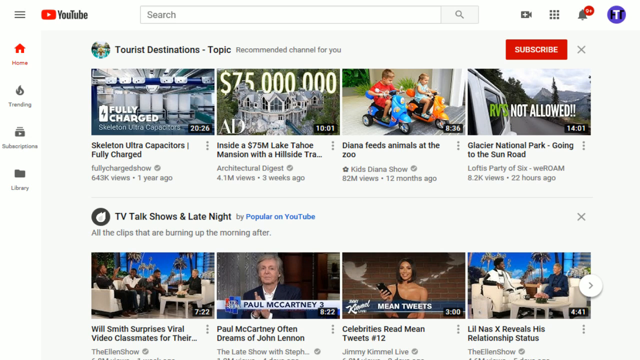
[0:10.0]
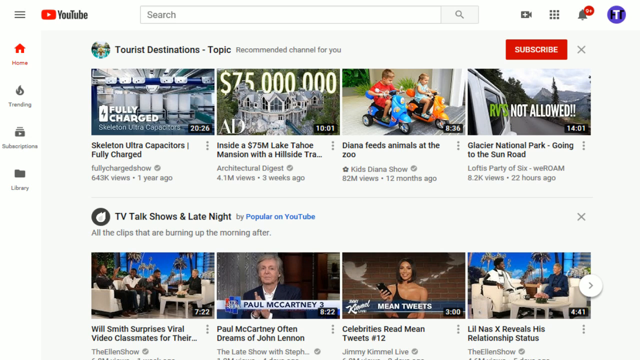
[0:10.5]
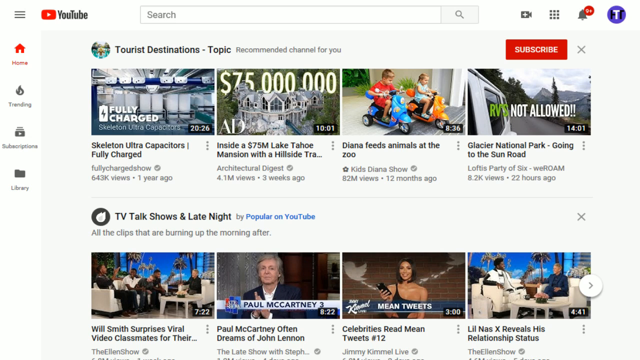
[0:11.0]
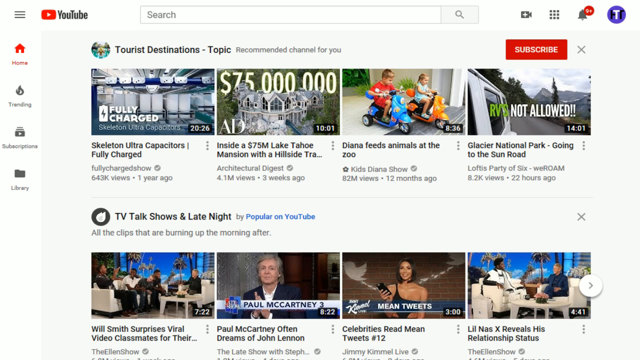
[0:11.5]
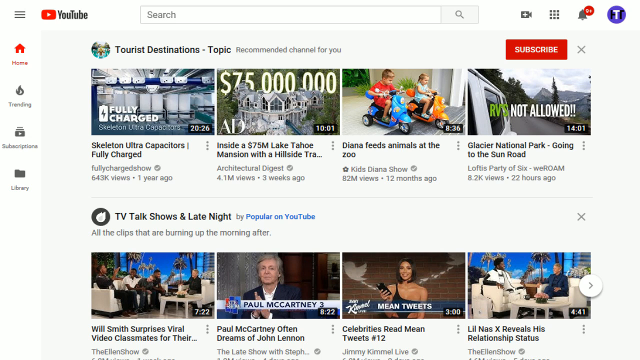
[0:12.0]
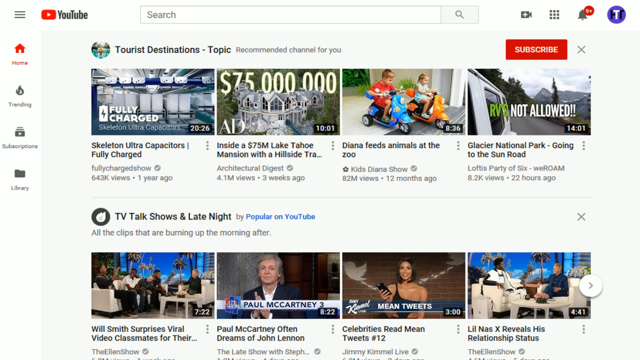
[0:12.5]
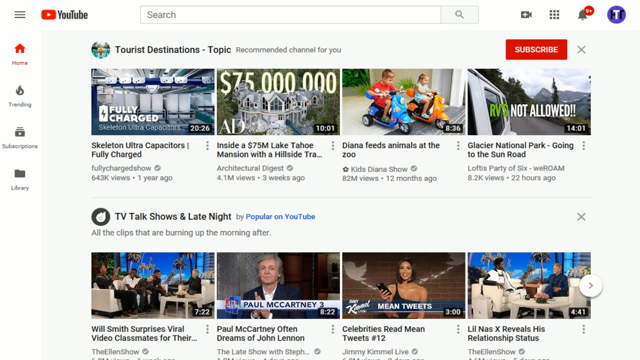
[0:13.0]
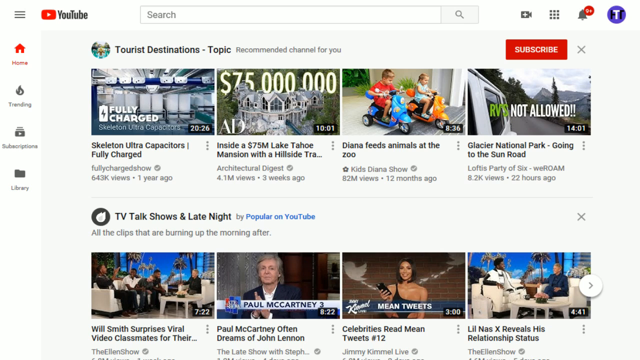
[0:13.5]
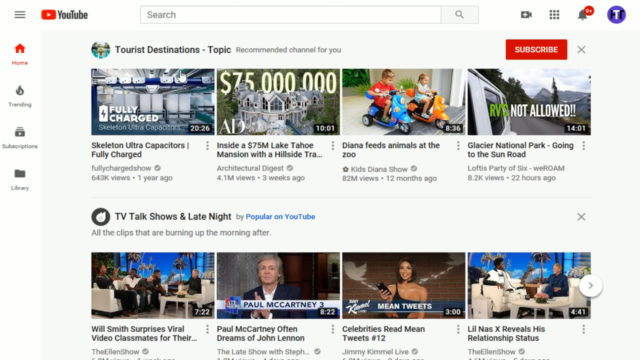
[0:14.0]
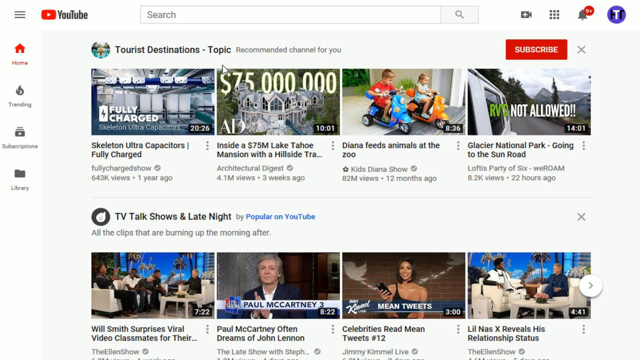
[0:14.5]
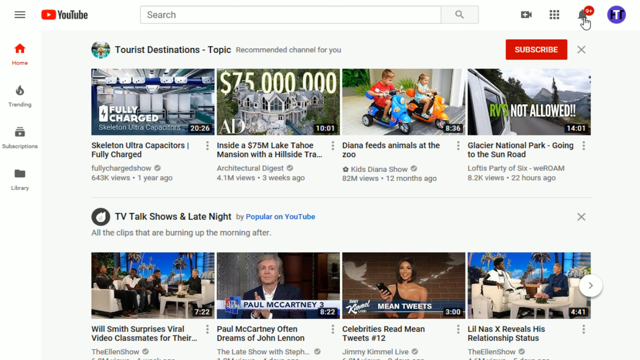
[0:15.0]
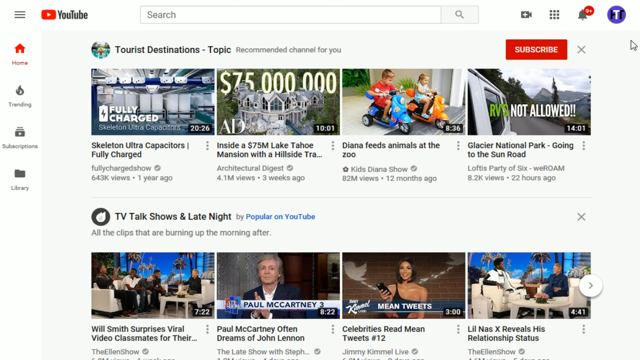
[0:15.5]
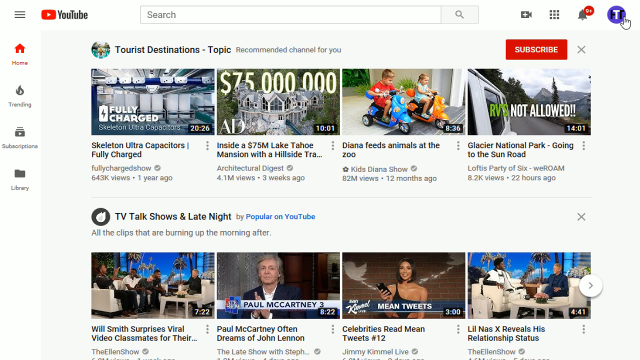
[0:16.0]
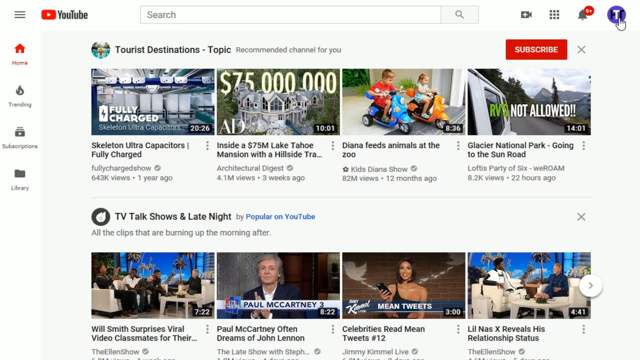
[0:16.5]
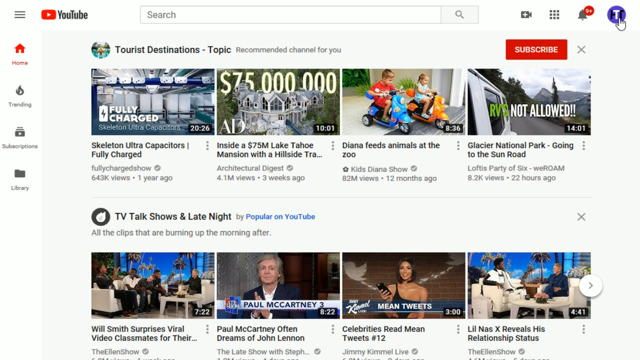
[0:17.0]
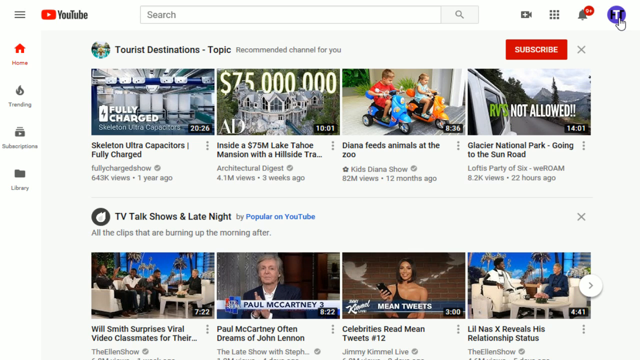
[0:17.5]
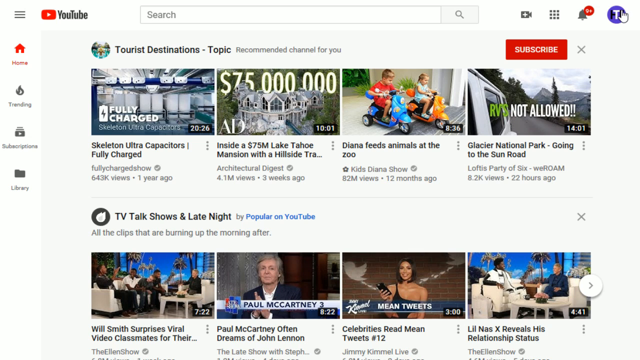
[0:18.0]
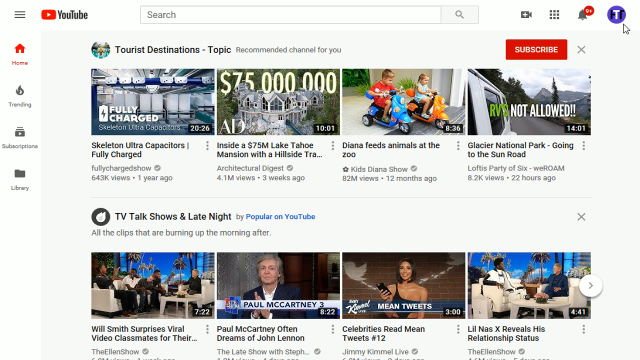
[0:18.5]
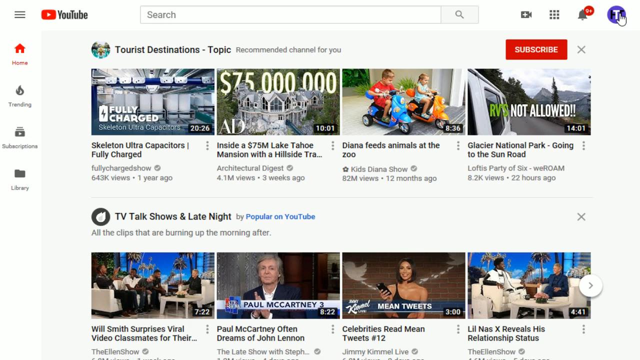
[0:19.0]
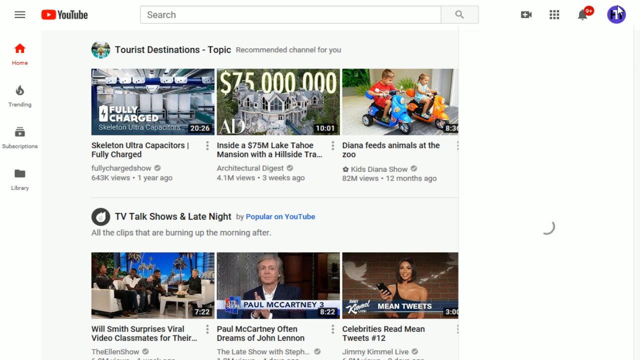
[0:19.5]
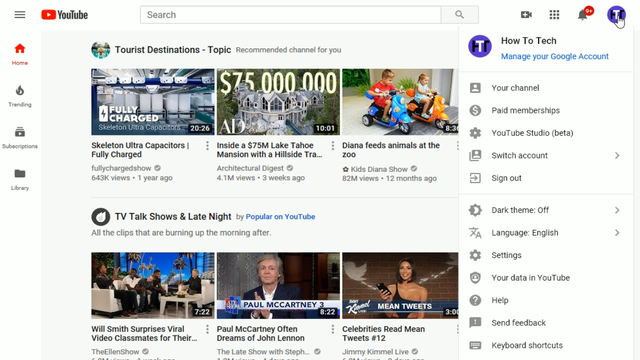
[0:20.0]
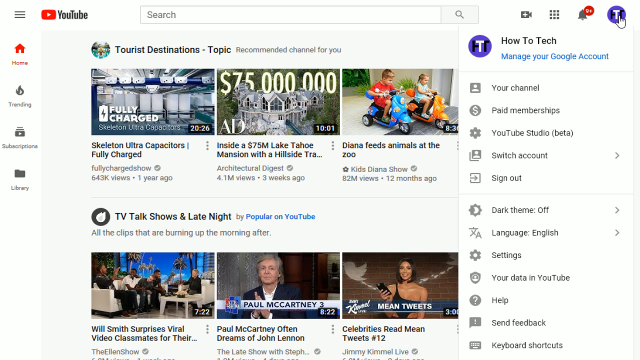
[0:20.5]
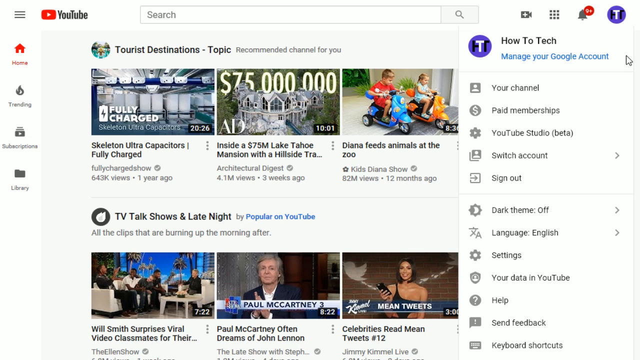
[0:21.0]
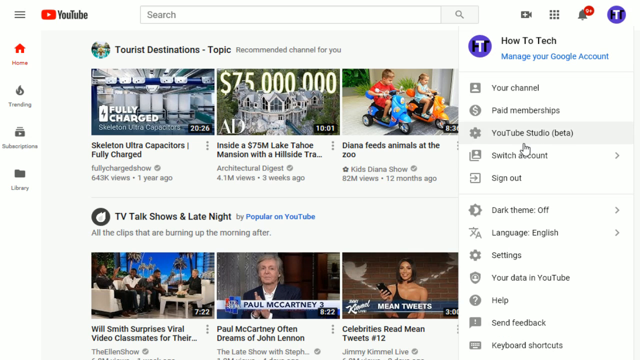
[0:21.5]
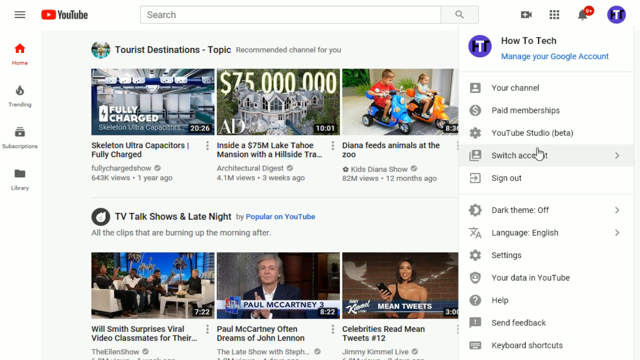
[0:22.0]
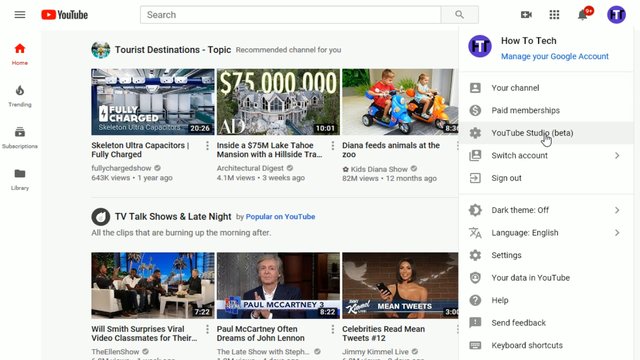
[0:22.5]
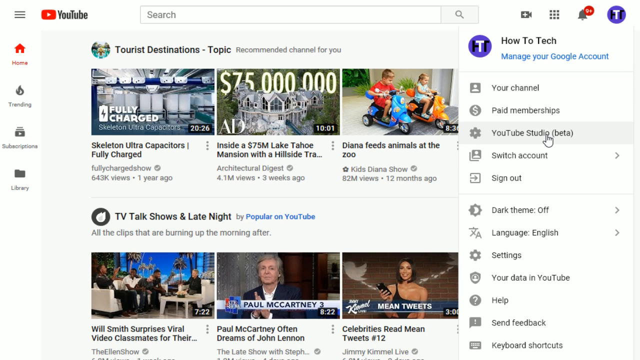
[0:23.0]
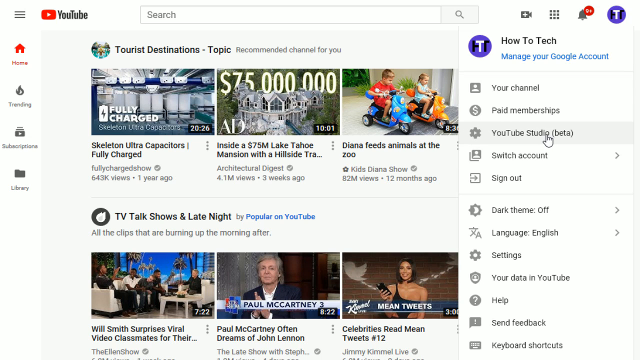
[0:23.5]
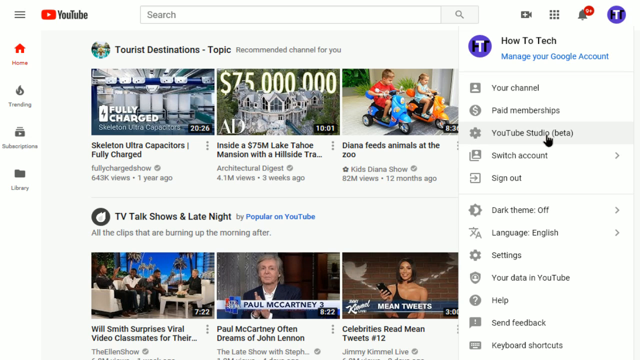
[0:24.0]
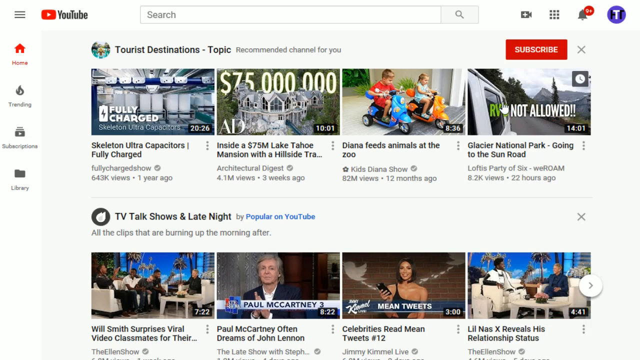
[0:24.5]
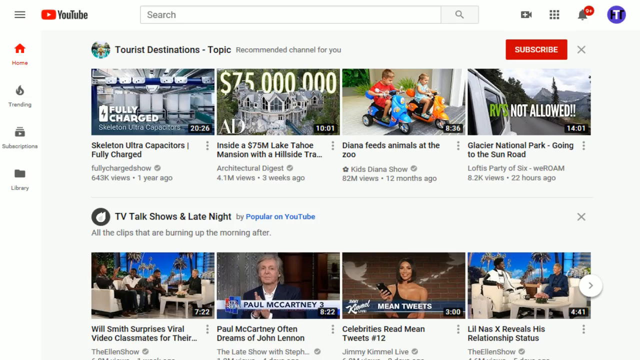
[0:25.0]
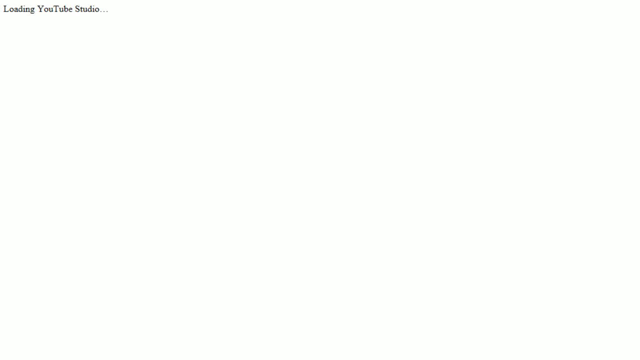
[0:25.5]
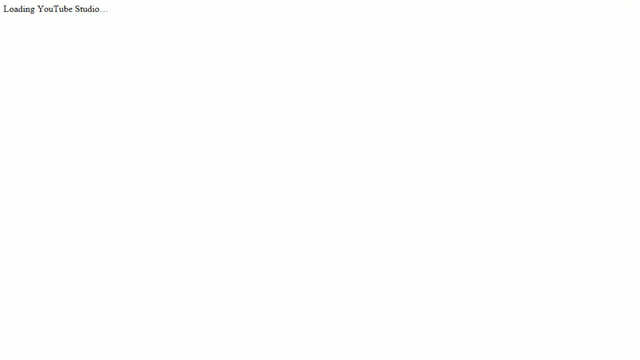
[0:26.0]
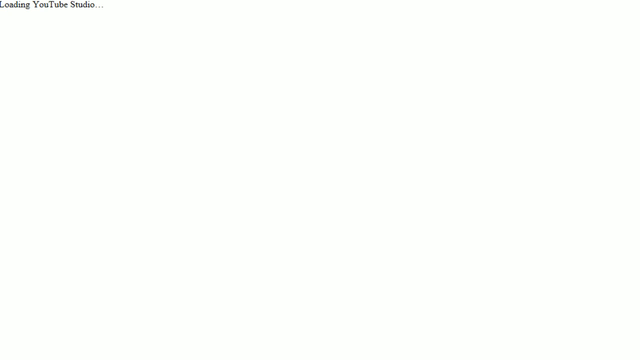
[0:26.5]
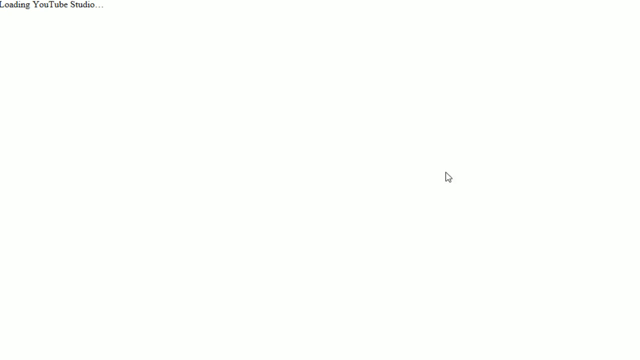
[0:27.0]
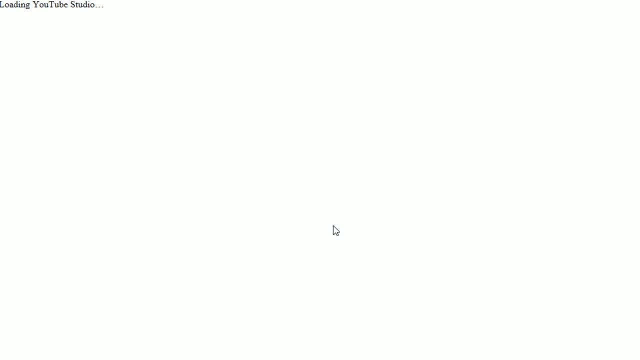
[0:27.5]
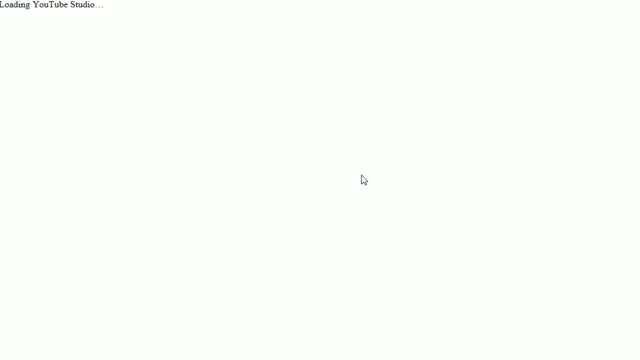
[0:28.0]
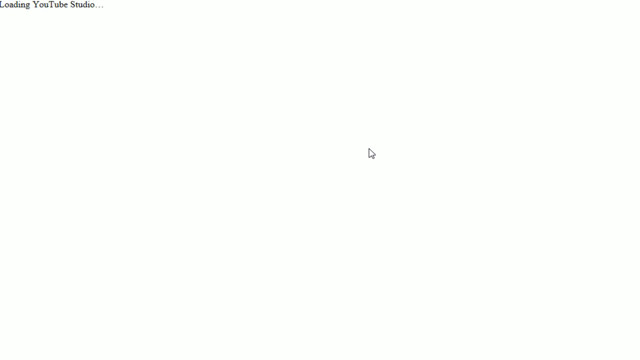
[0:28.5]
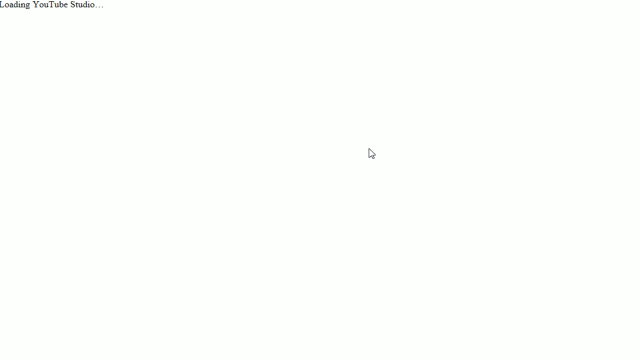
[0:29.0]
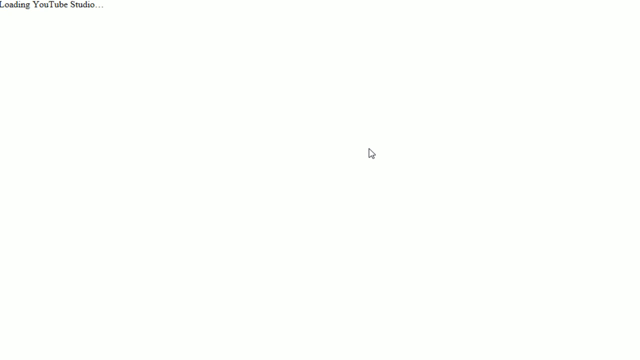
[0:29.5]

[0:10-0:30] On the YouTube homepage, a cursor appears and hovers around the page, moves to the top right corner, and clicks the channel icon, which has the name HowToTech. It then moves down to the YouTube Studio Beta option in the channel sidebar and clicks it. The YouTube Studio page begins to load on a white background screen. No physical subjects are visible, only the cursor being controlled; the scene moves between the YouTube homepage, the sidebar, and the YouTube Studio loading page.